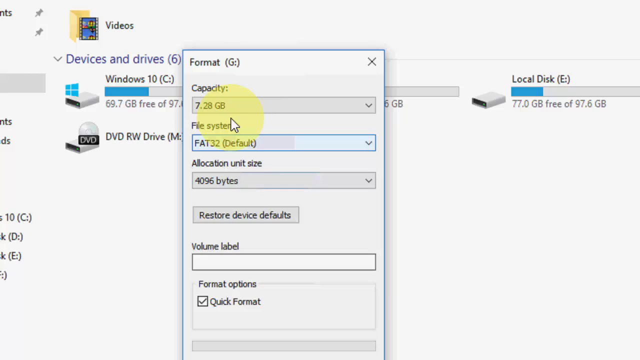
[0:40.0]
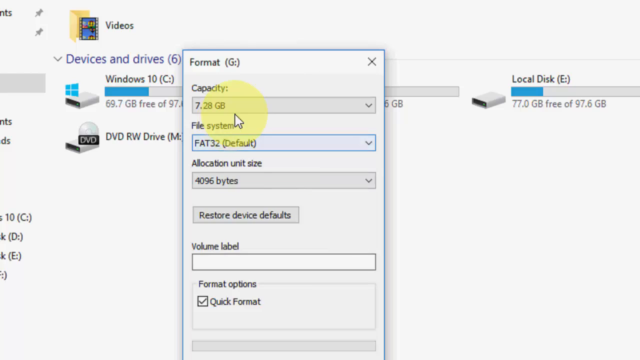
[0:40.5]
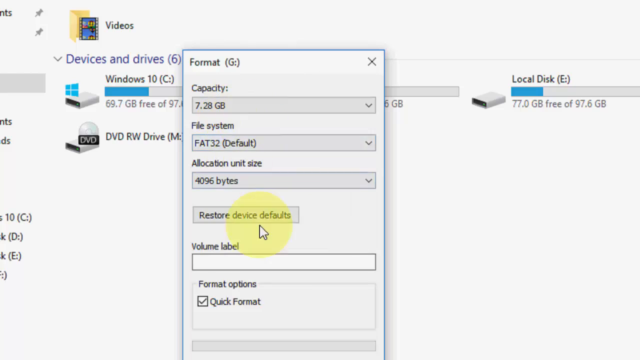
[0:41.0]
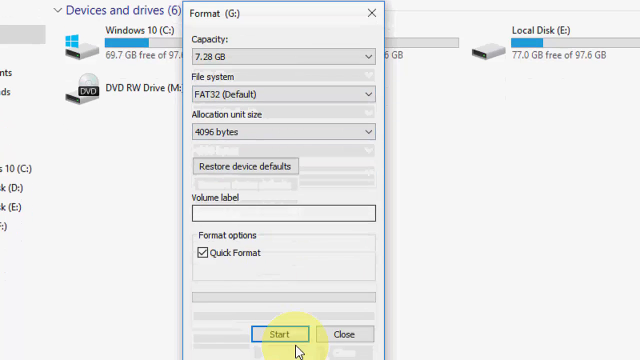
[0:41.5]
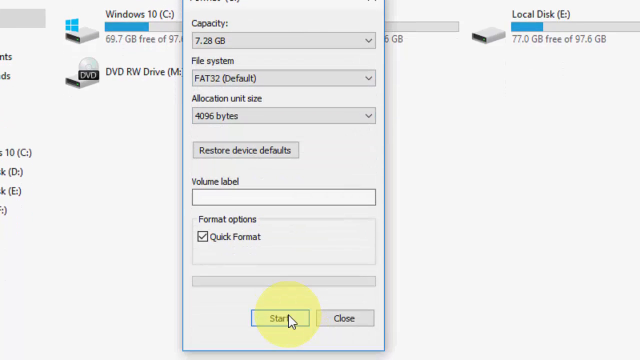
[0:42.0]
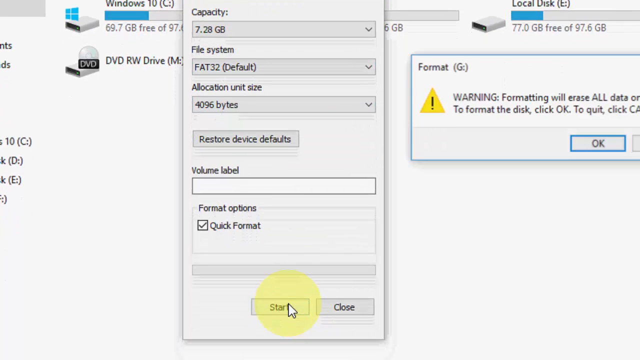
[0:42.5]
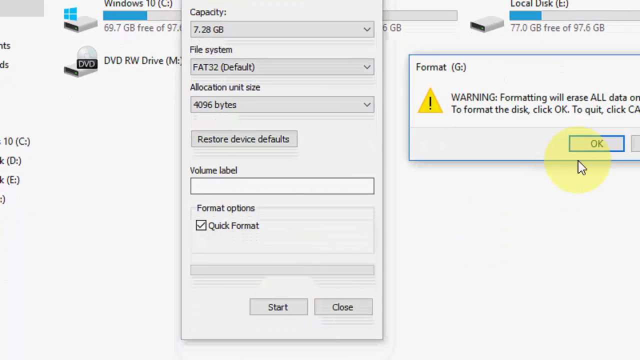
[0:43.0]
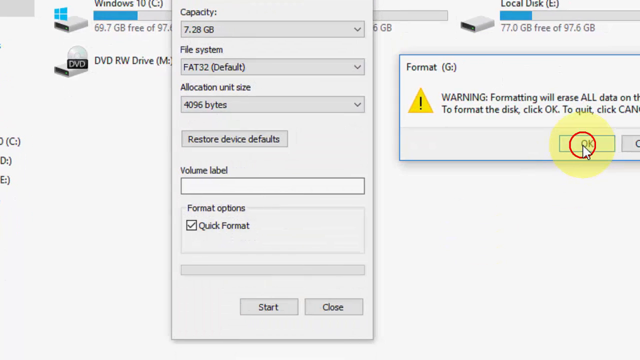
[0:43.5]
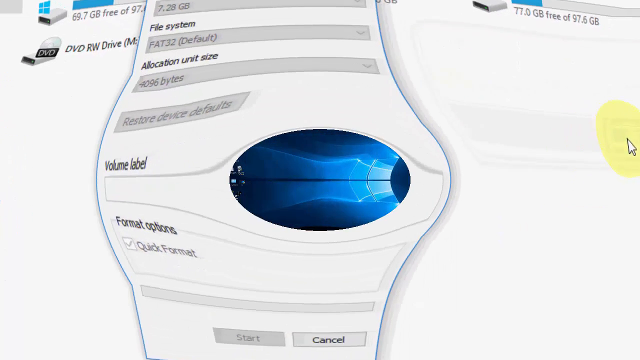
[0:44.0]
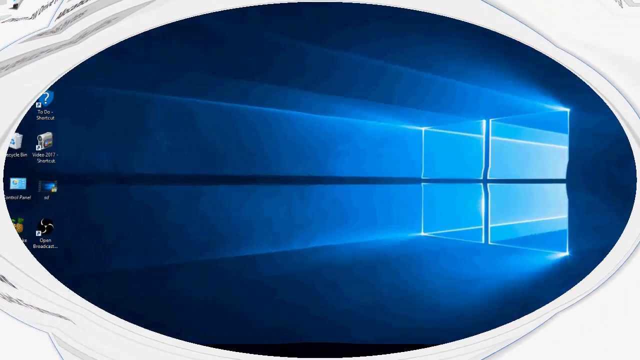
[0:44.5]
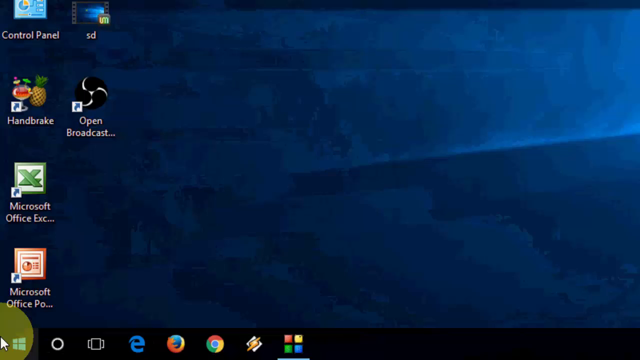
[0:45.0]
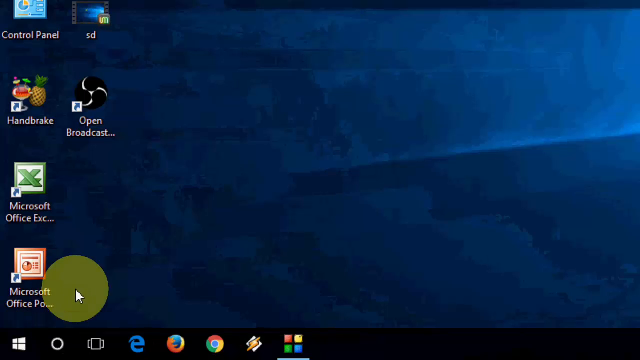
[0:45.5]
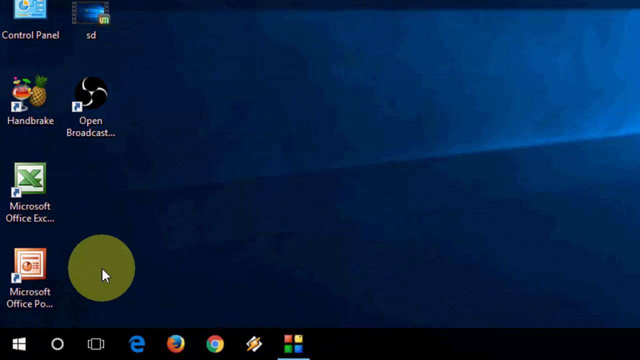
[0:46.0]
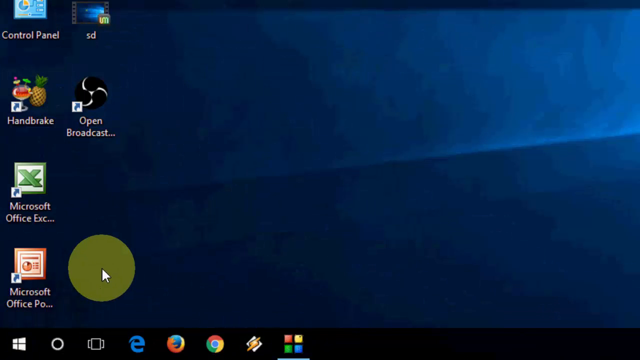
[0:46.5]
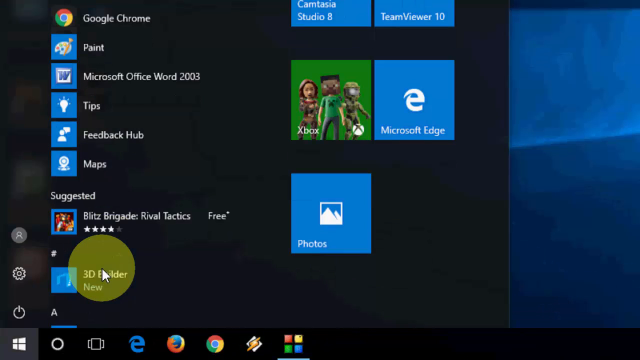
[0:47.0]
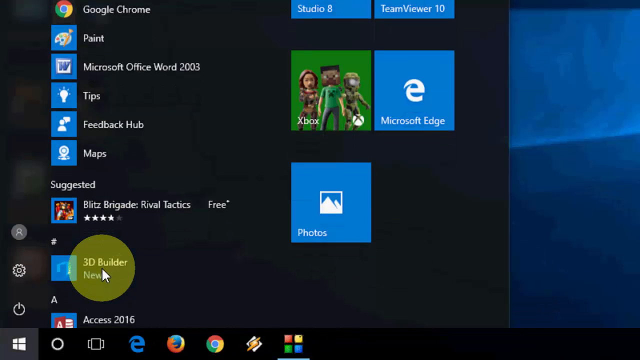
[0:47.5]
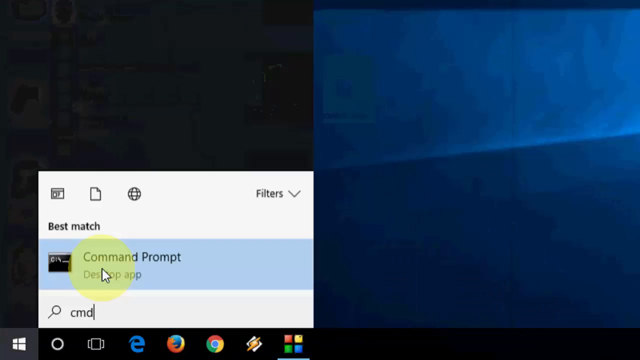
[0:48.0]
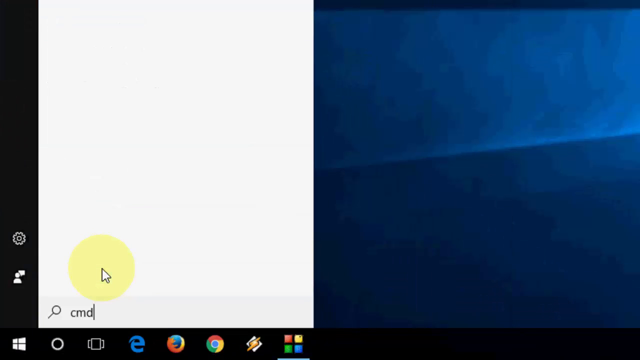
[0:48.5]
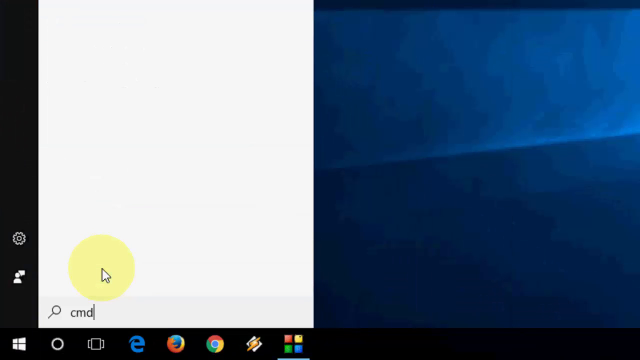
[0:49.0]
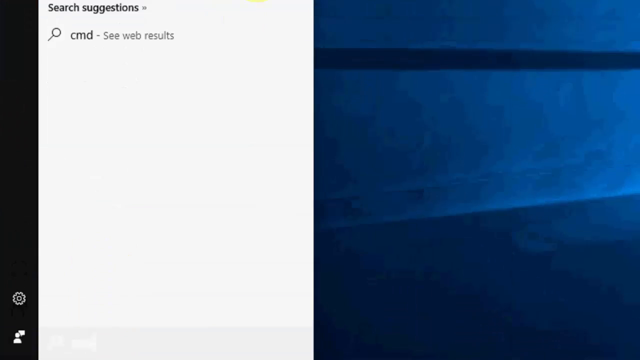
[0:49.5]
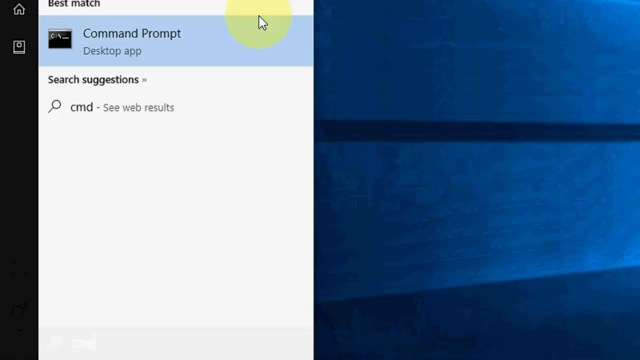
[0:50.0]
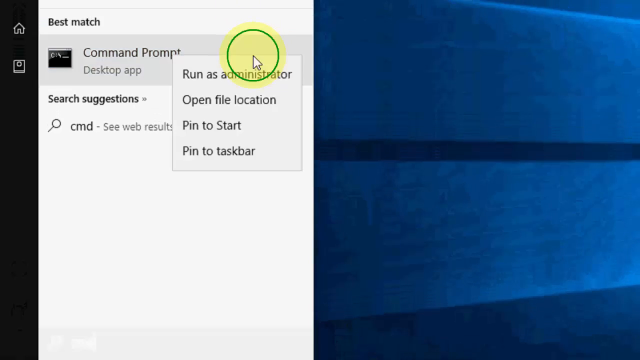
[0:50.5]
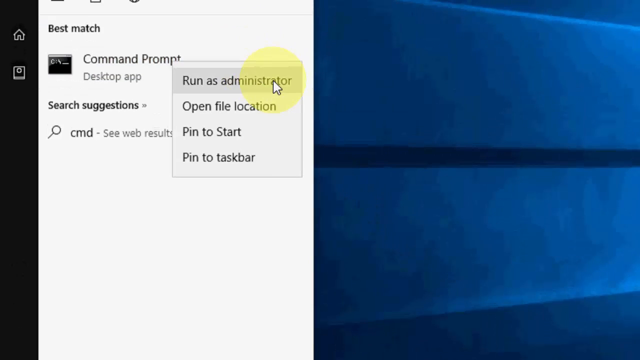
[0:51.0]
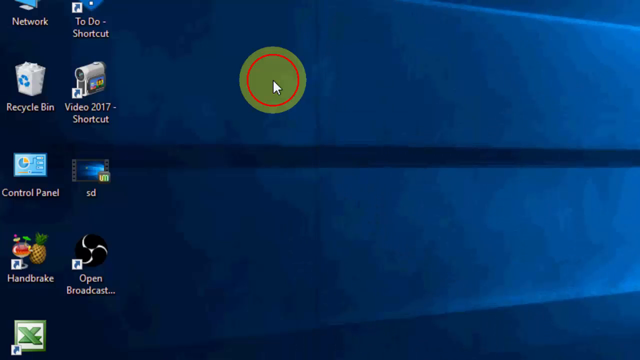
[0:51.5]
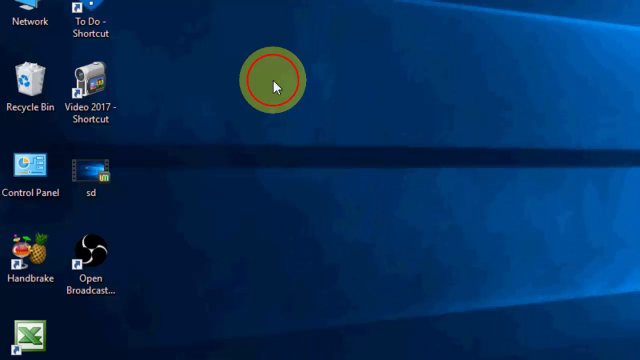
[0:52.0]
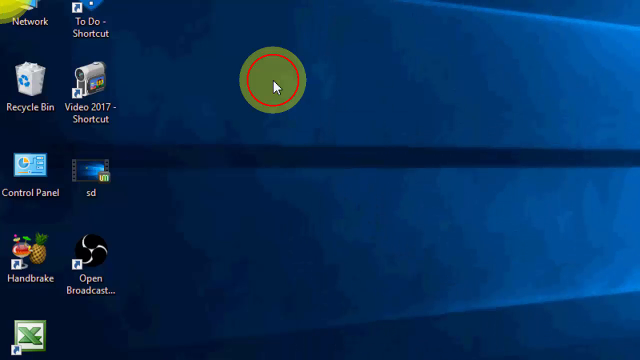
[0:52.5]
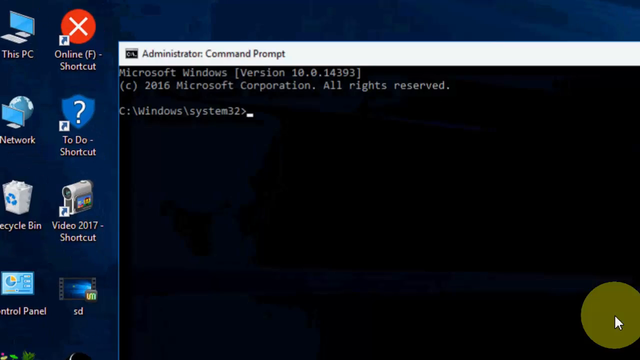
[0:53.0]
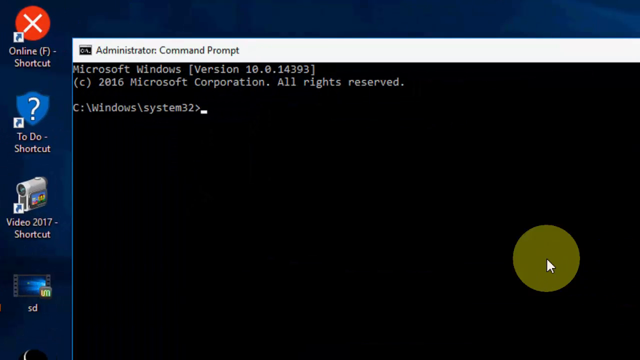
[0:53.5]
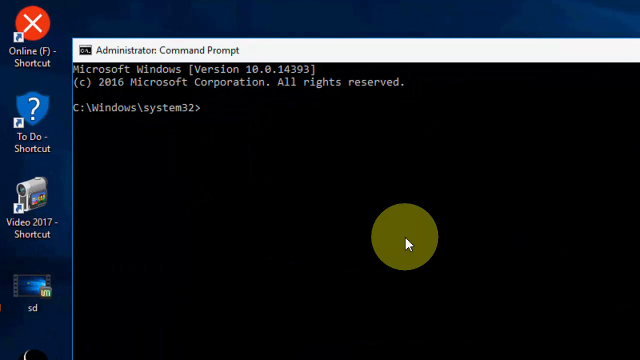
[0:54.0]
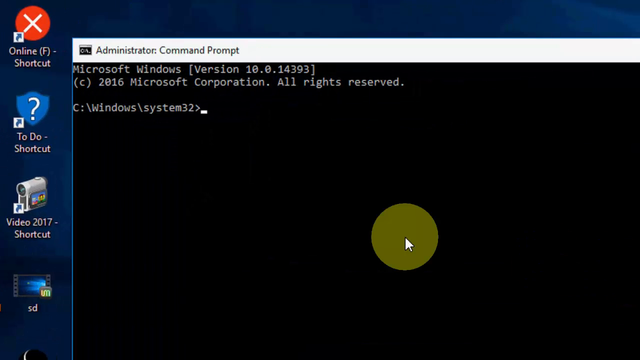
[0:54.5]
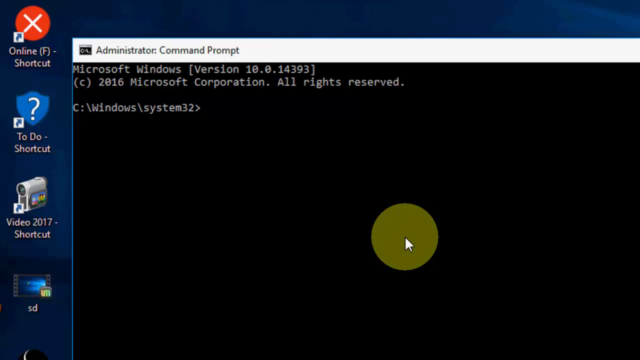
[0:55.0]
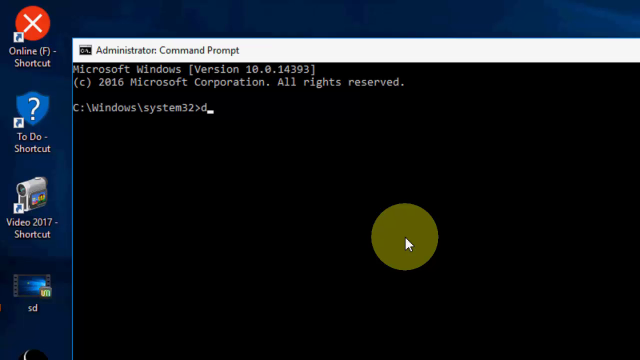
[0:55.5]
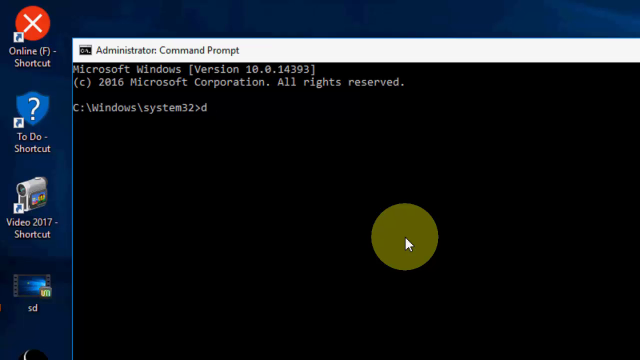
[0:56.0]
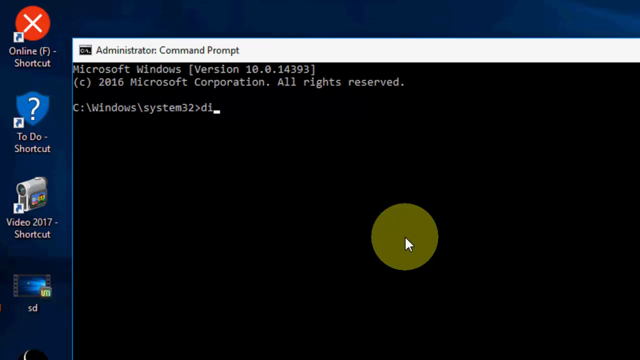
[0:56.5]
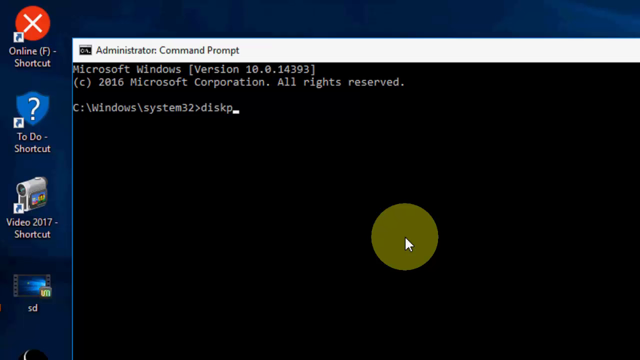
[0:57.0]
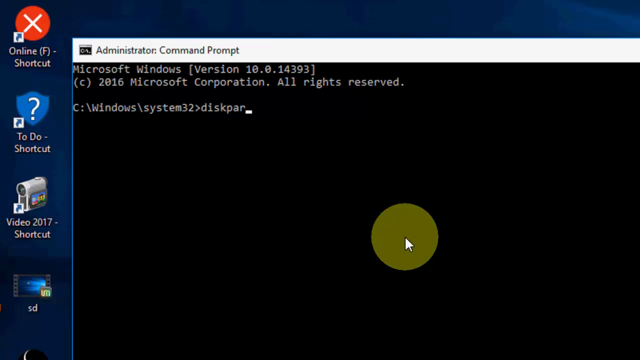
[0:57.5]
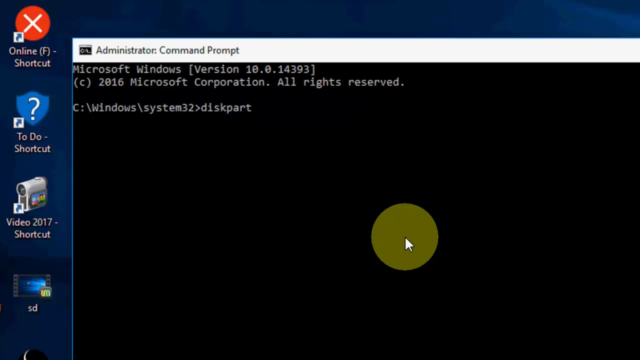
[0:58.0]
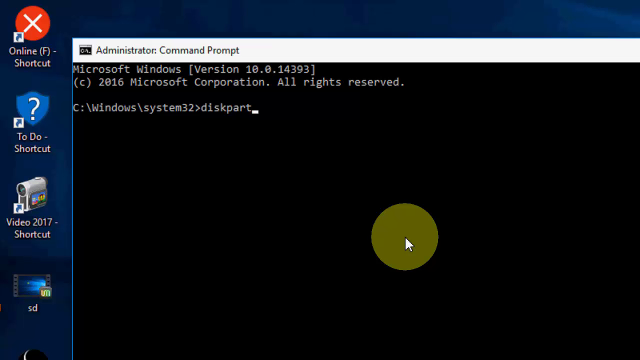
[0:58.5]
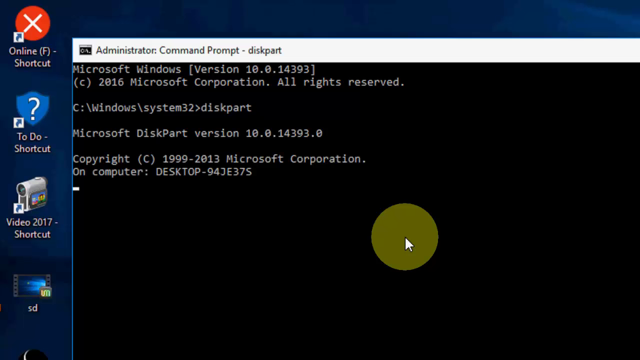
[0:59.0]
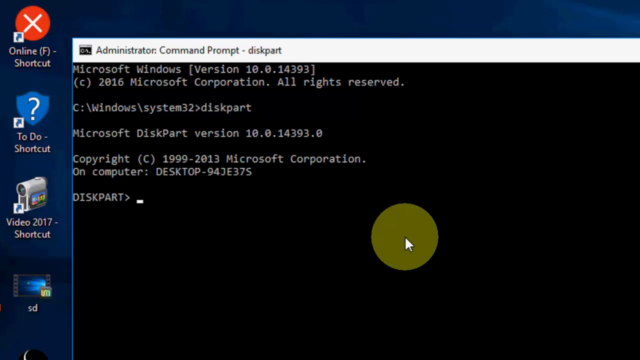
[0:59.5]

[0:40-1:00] The format page for the G disk is open, showing capacity 7.28 GB, file system "FAT32 (default)", allocation unit size "4096 bytes", "restore device defaults", volume label, and format options with "quick format". After the format is started, a page comes up reading "Warning: formatting will erase all data on the disk. To format the disk, click OK. To quit, click cancel." The person clicks OK, and the screen returns to the Windows page with the blue background seen earlier. The Windows button at the bottom is selected, "command" is typed in, and it is run as administrator. The command prompt opens as administrator showing the C drive Windows system 32 path. The person types "diskpart", and it shows Microsoft DiskPart version 10.0.14393.0, copyright 1999-2013 Microsoft Corporation, on computer desktop 94je37s. DiskPart then opens.